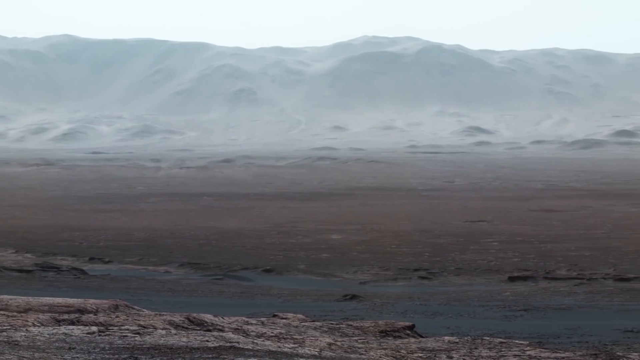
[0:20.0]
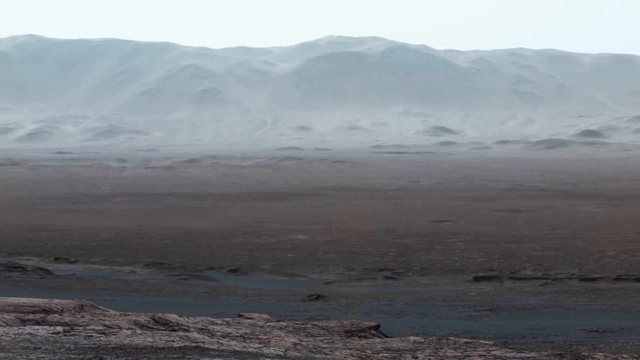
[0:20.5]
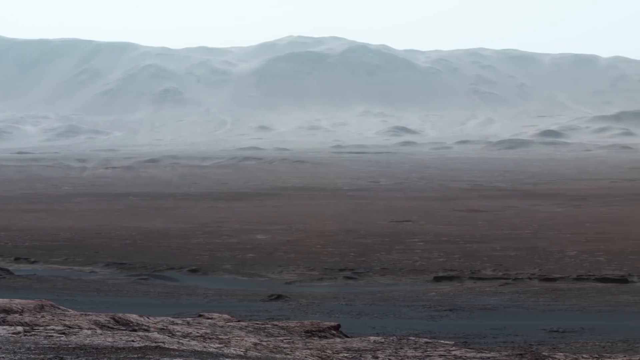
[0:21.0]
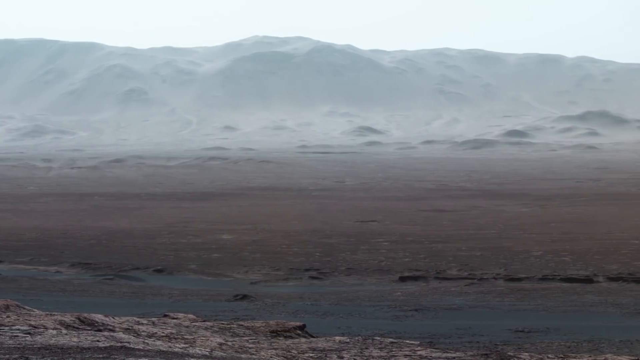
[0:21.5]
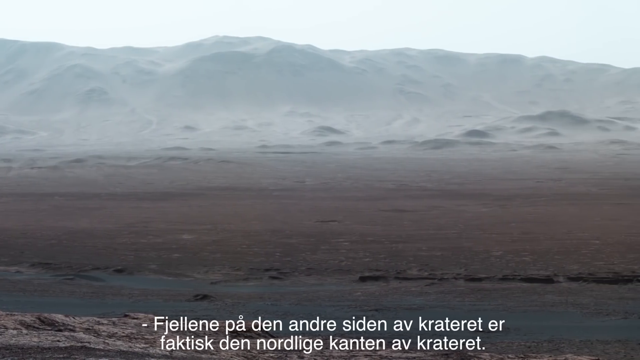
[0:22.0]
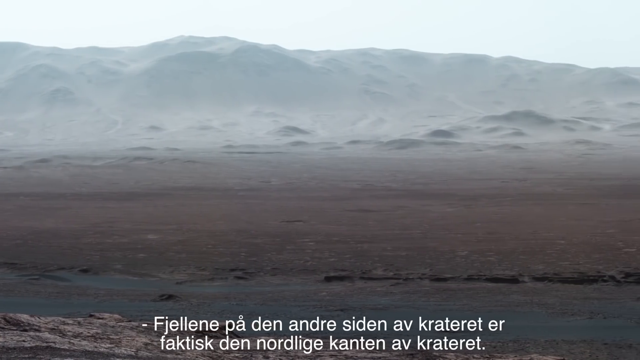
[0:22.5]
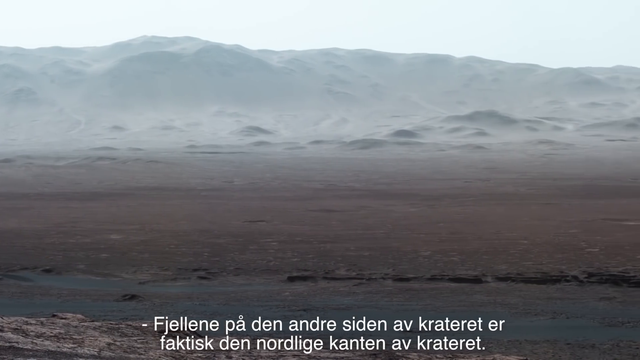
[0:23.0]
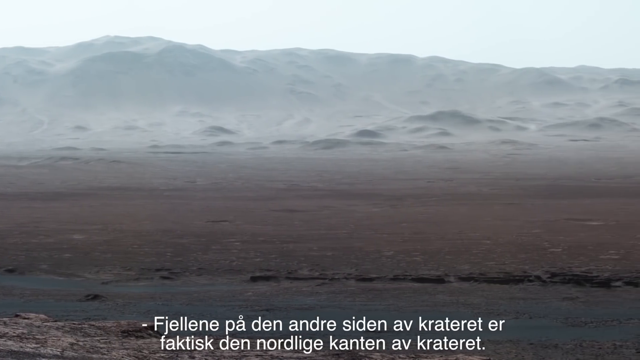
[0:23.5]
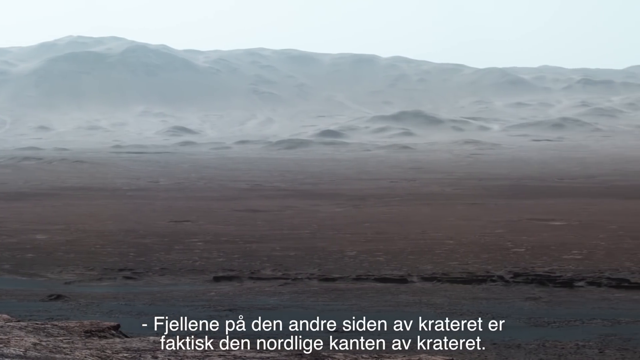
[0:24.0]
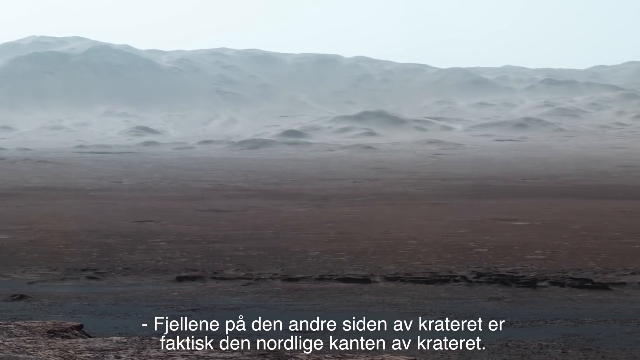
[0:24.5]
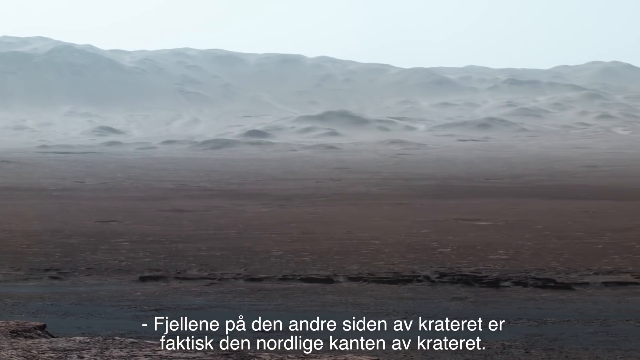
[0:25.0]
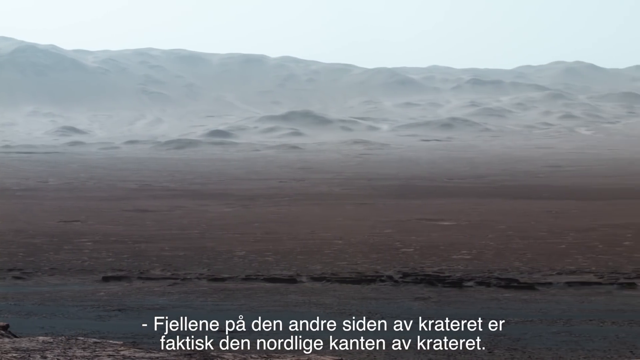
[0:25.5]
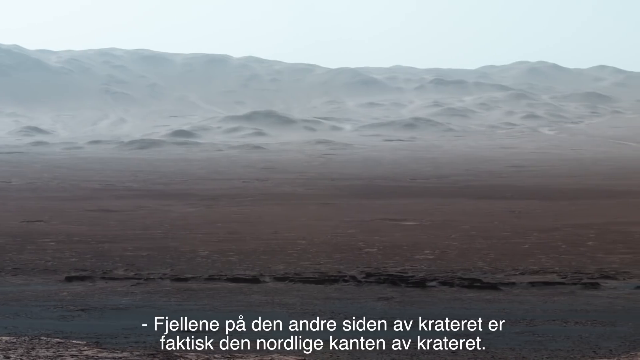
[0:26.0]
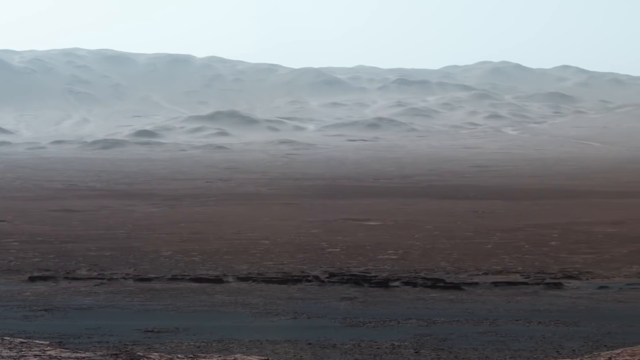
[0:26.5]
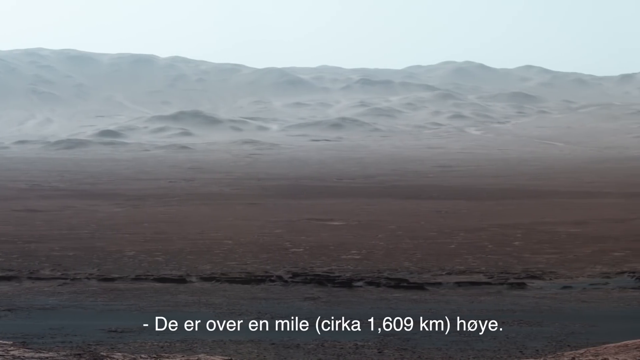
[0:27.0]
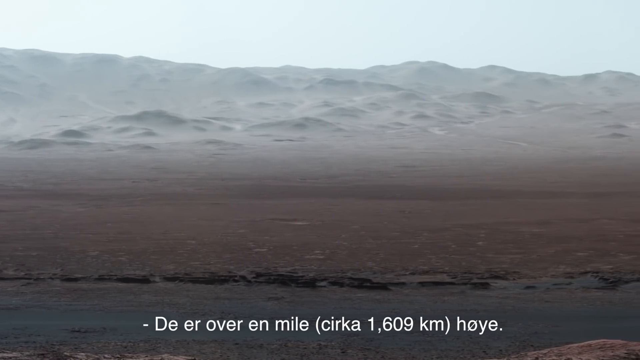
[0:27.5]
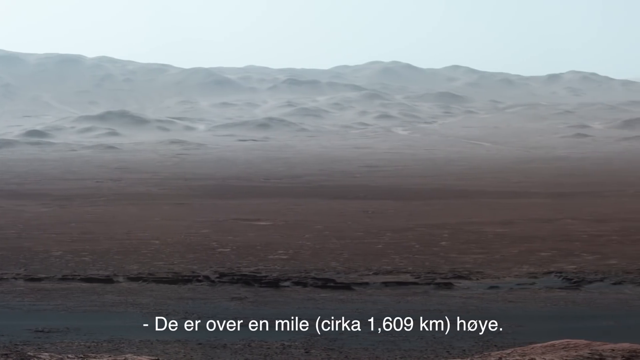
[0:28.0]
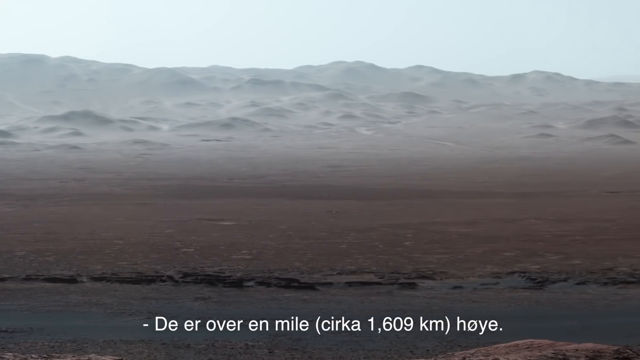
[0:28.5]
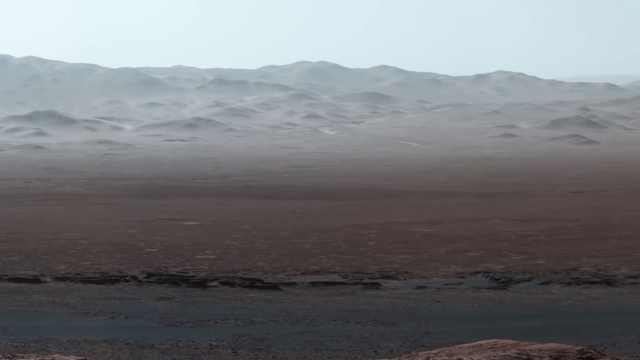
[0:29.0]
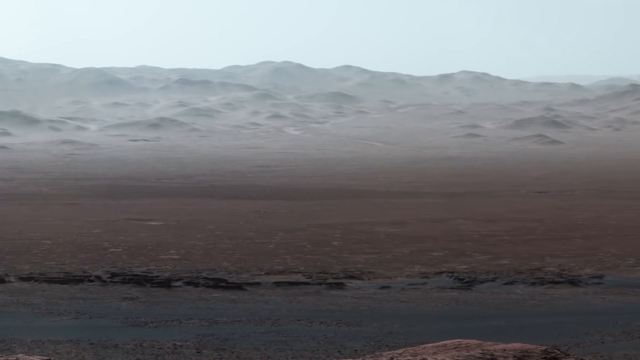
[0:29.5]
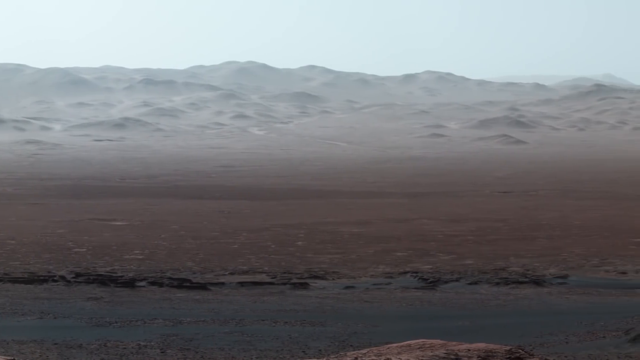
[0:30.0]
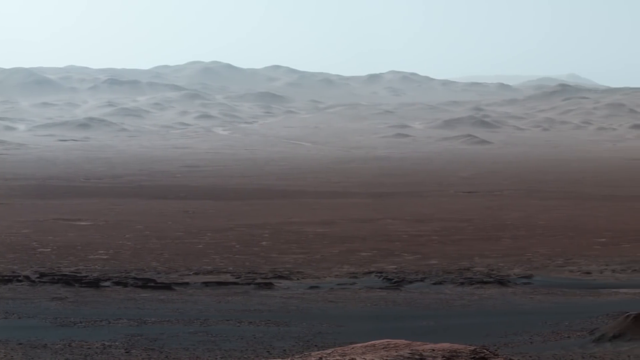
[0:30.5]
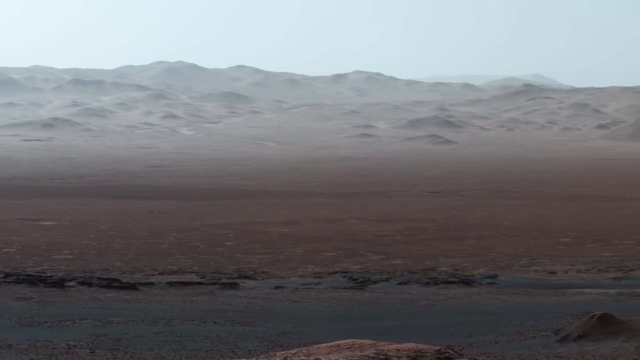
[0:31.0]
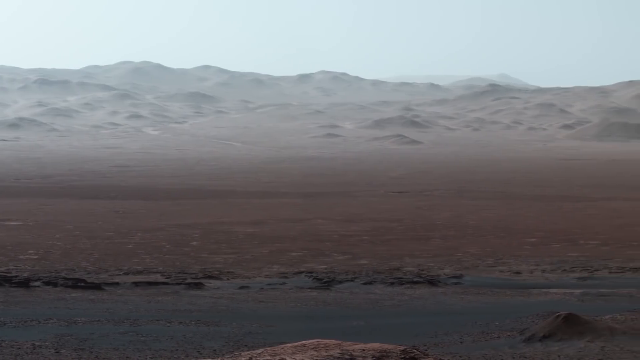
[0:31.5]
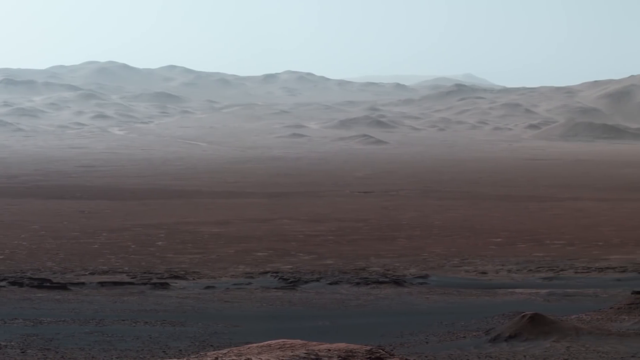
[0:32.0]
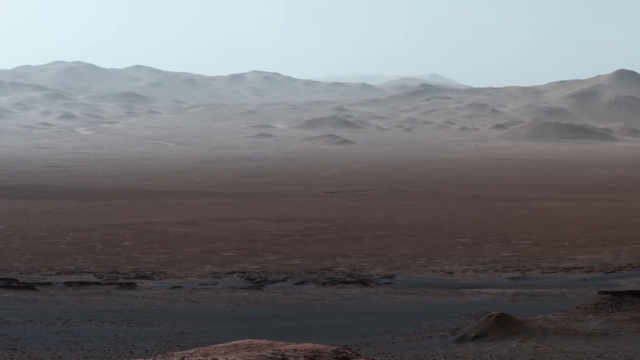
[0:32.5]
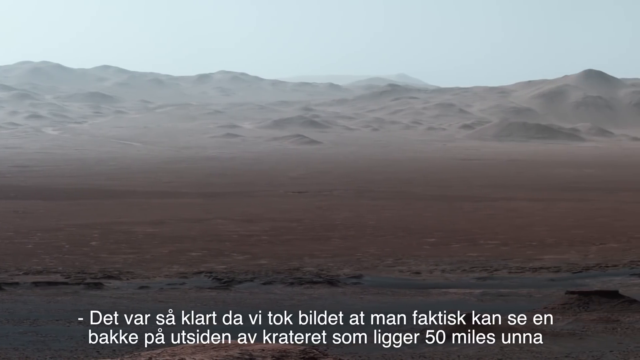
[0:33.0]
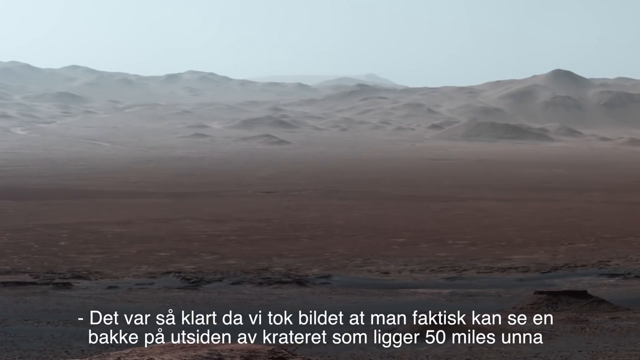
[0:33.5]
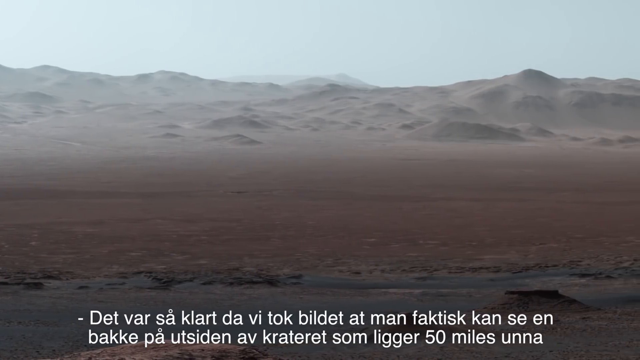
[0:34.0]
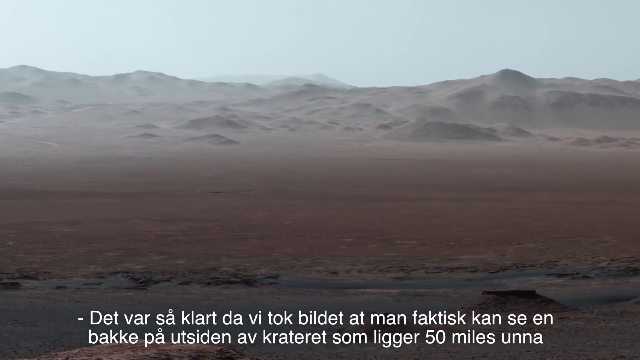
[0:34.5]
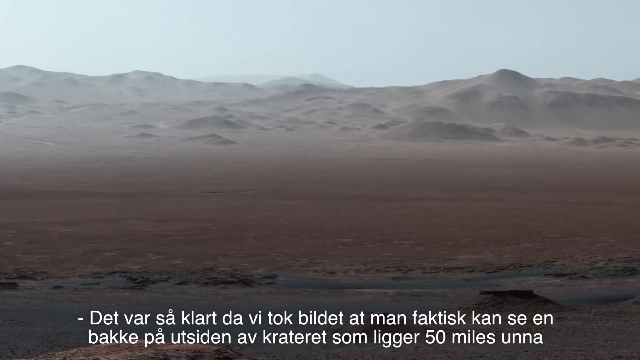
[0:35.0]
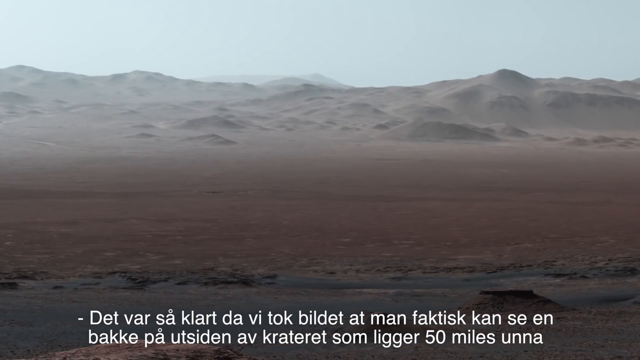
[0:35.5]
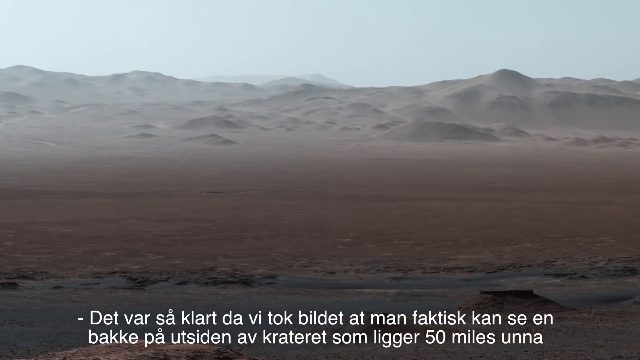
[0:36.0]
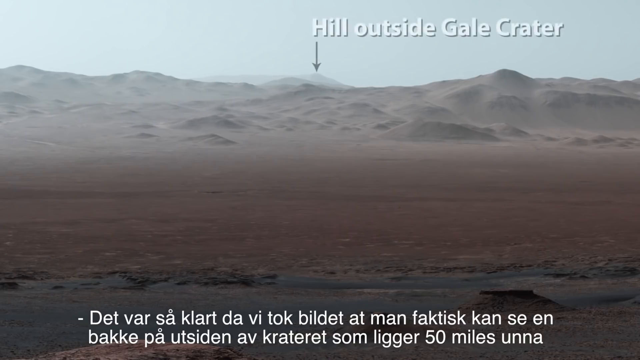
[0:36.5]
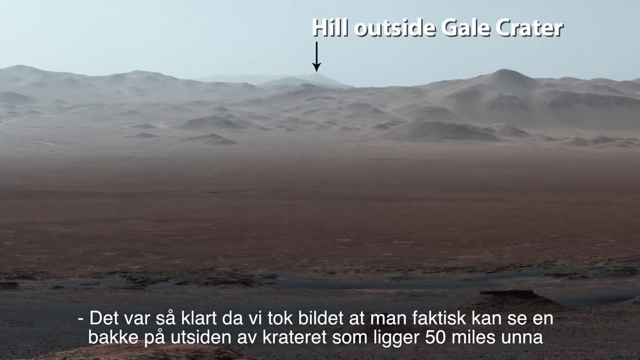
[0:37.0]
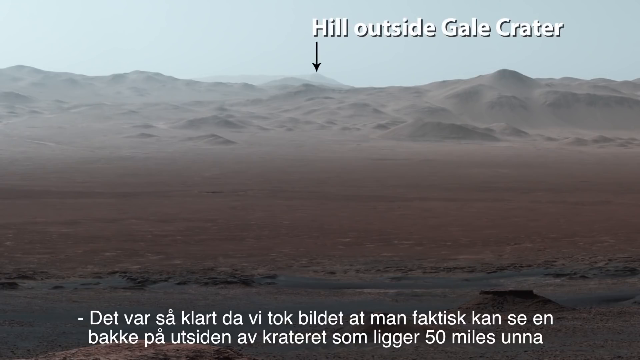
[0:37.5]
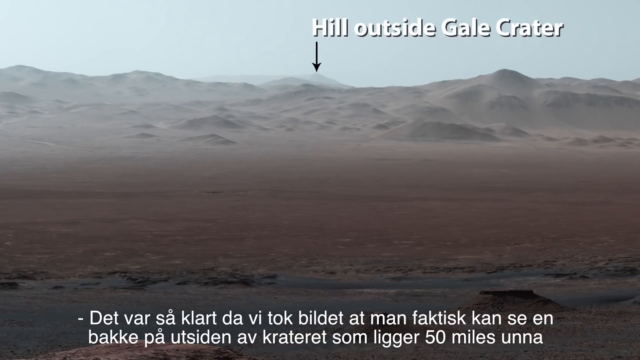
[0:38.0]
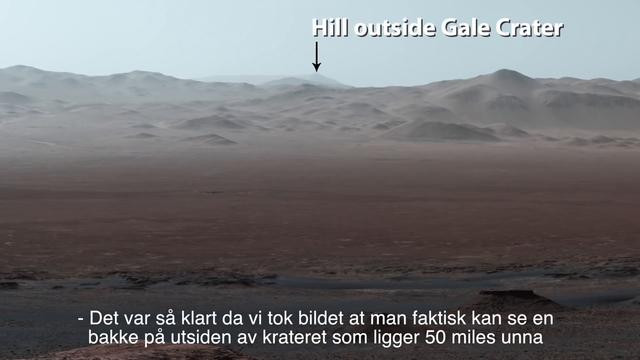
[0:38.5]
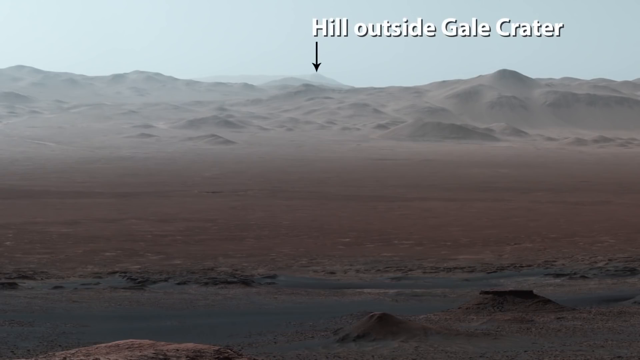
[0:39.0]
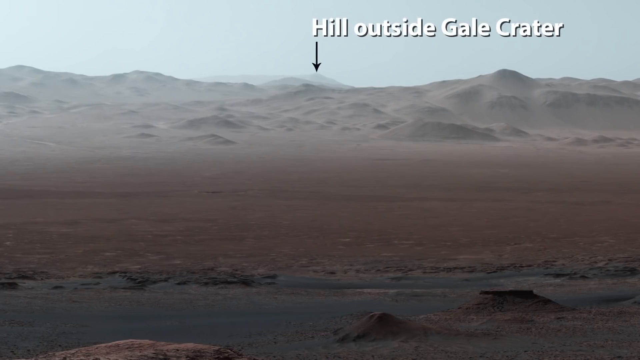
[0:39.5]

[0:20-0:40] A mountainous area has a bit of a white, fog-like haze with a somewhat blue, ashy color. The ground is brown with craters in it; it looks wet and slightly muddy, with a lot of texture and rough surfaces. The camera moves toward the right, and white text in another language appears at the bottom of the screen, including "1,609 km". As the camera continues right, rocky areas are visible on the ground. Additional white text, some of it in English, reads "50 miles". A small black arrow pops up pointing into the distance with white text reading "hill outside Gale Crater". The camera then begins to move toward the left.